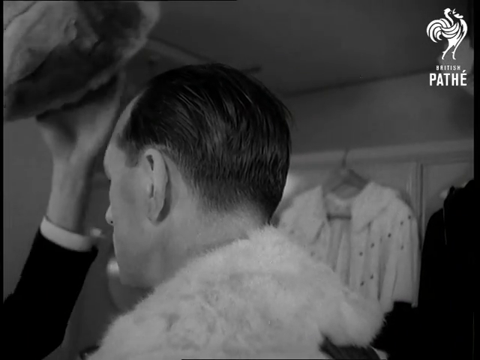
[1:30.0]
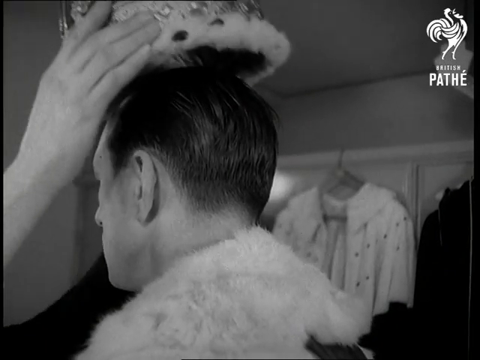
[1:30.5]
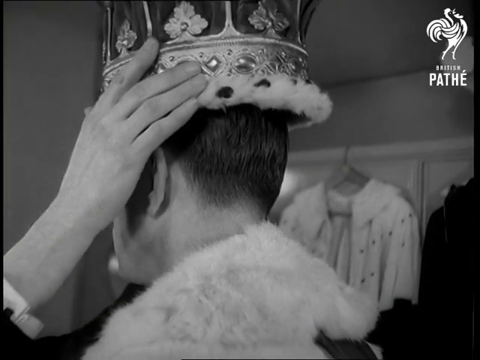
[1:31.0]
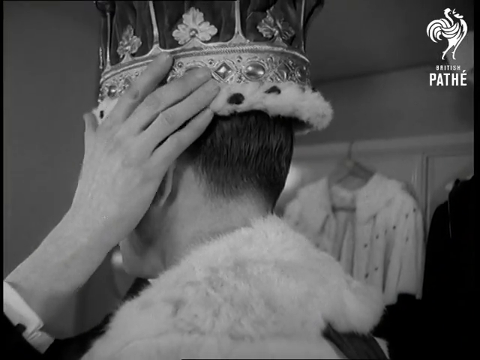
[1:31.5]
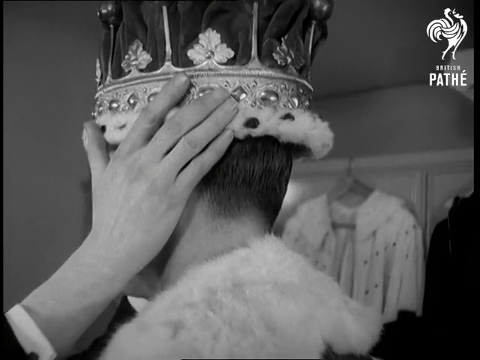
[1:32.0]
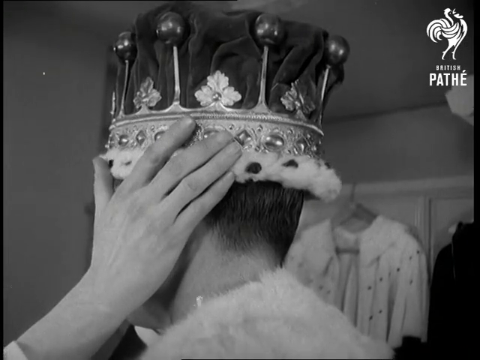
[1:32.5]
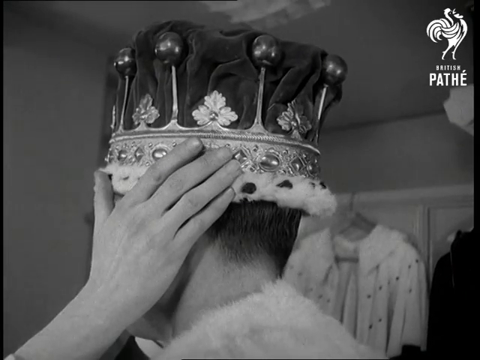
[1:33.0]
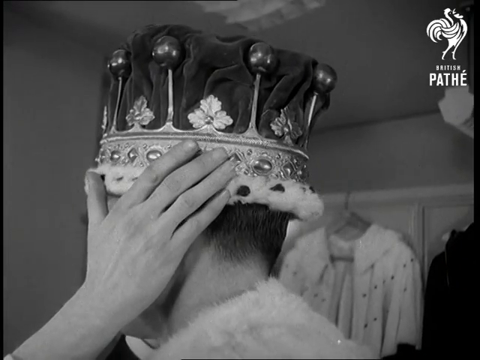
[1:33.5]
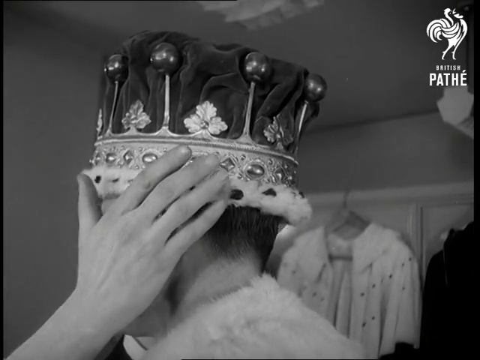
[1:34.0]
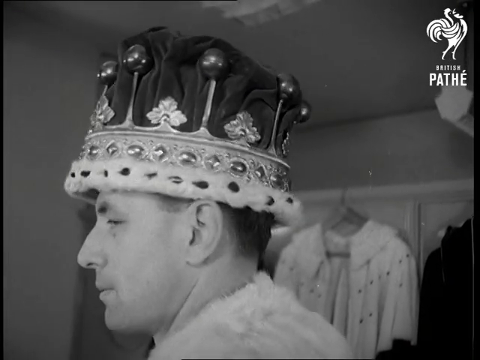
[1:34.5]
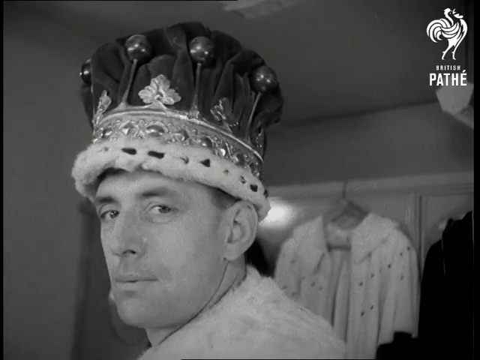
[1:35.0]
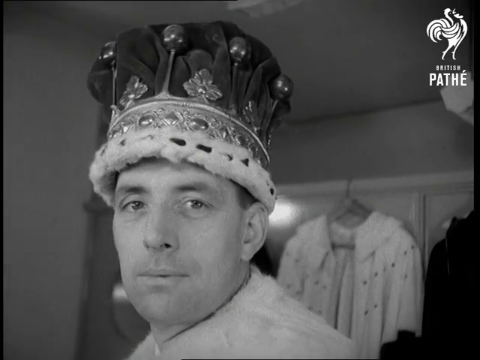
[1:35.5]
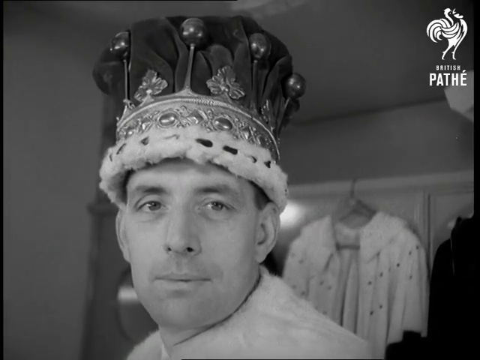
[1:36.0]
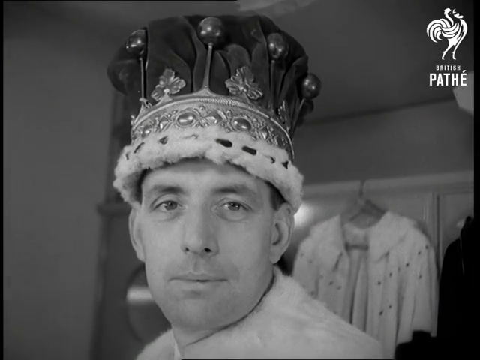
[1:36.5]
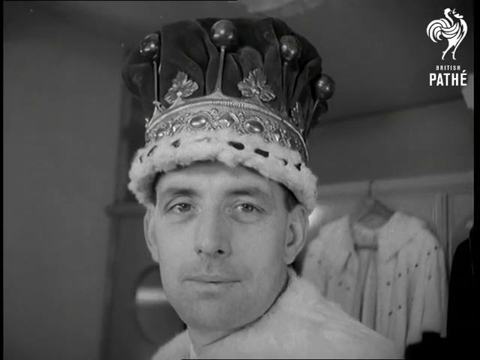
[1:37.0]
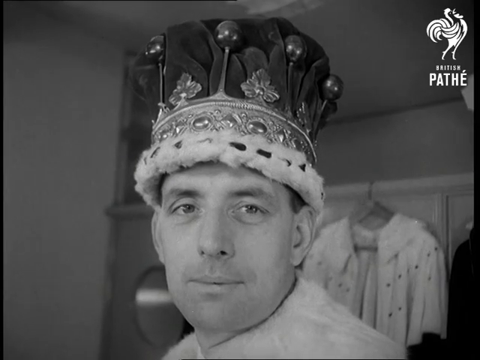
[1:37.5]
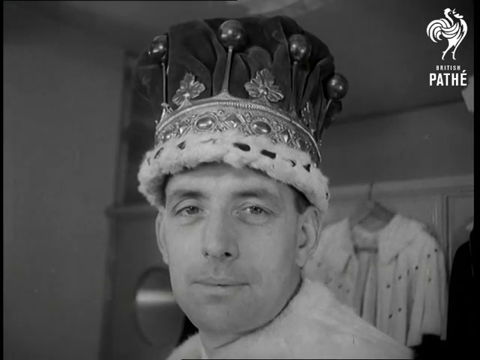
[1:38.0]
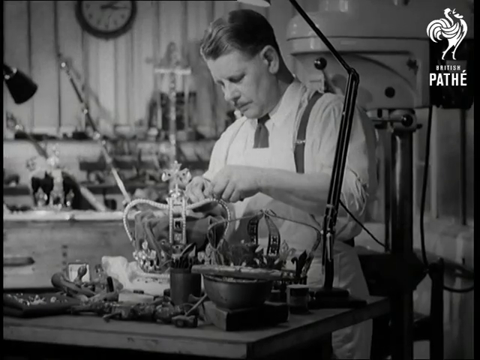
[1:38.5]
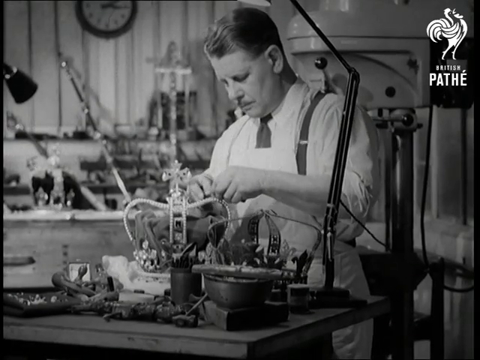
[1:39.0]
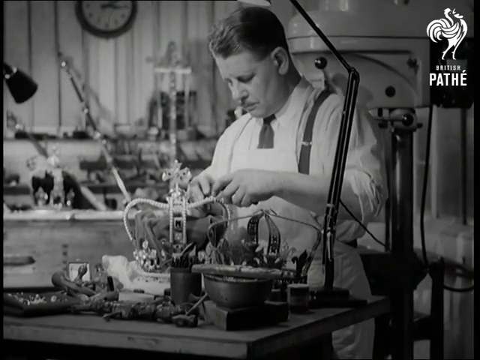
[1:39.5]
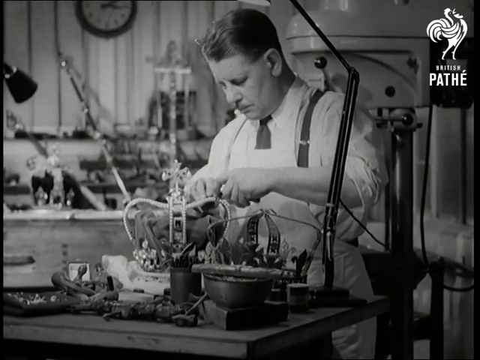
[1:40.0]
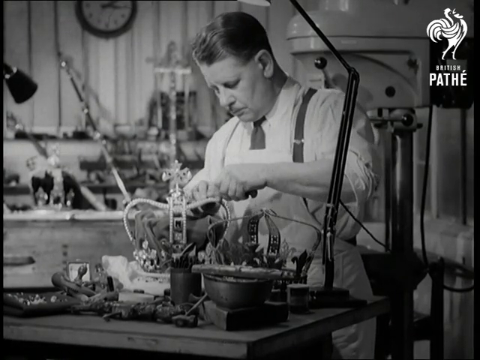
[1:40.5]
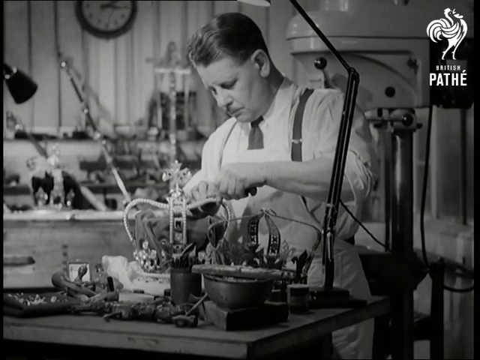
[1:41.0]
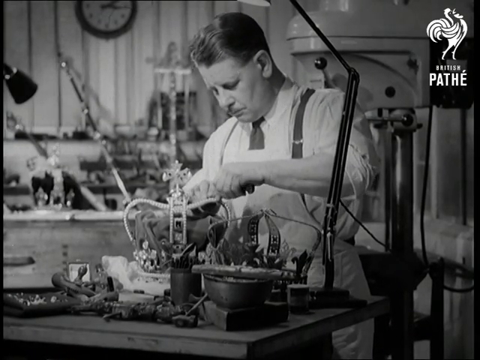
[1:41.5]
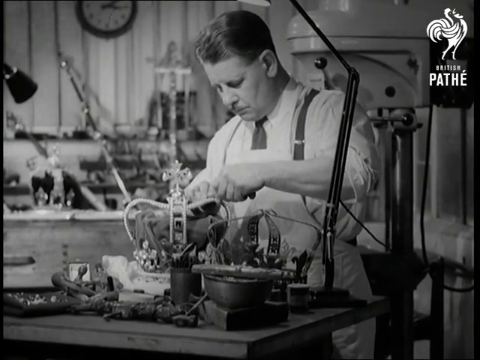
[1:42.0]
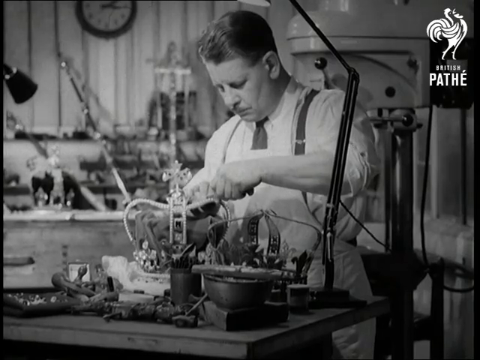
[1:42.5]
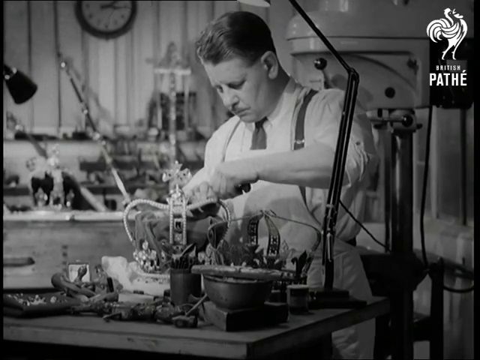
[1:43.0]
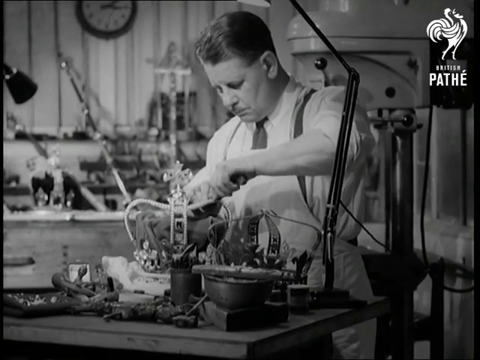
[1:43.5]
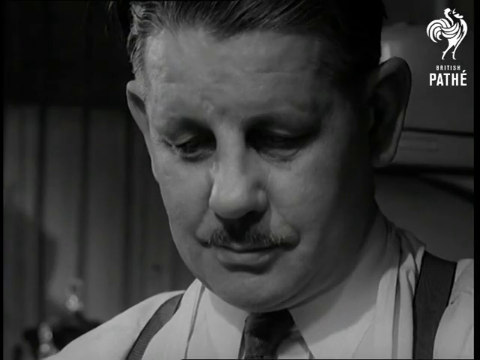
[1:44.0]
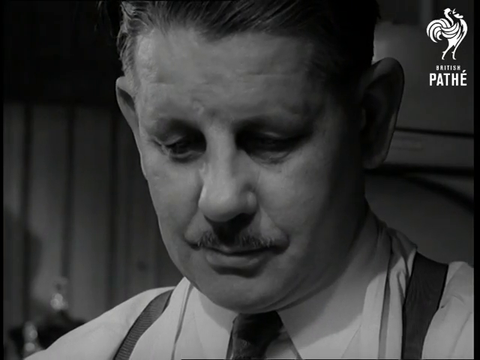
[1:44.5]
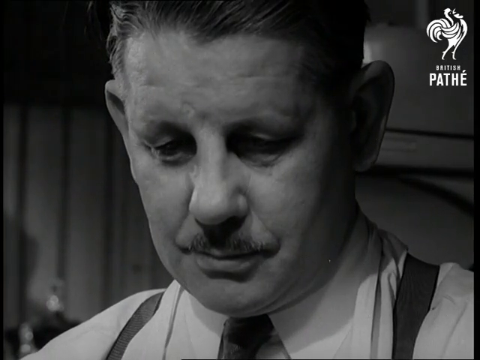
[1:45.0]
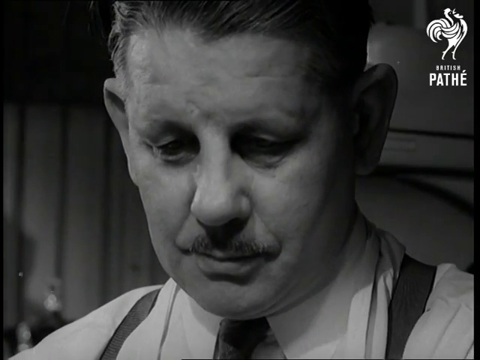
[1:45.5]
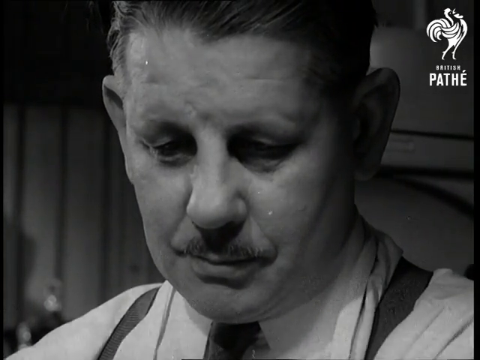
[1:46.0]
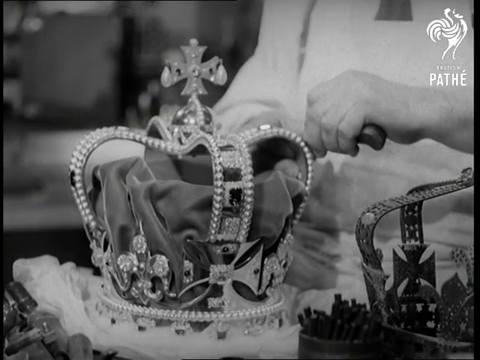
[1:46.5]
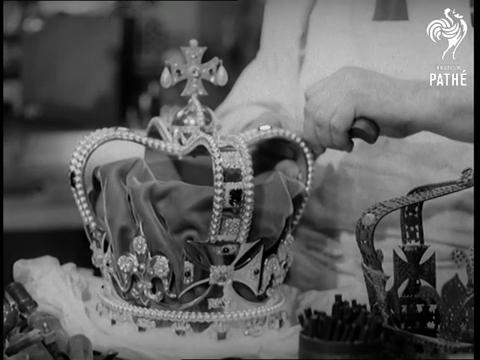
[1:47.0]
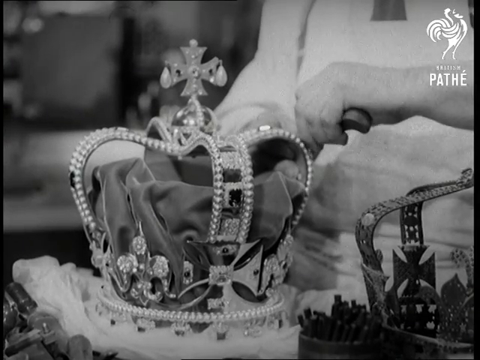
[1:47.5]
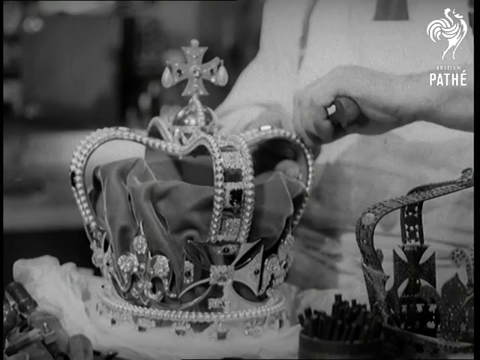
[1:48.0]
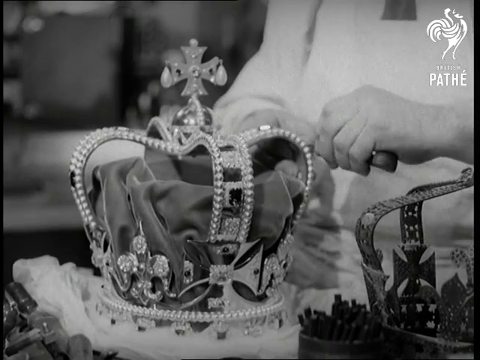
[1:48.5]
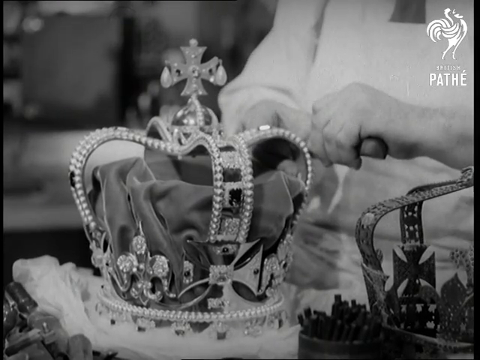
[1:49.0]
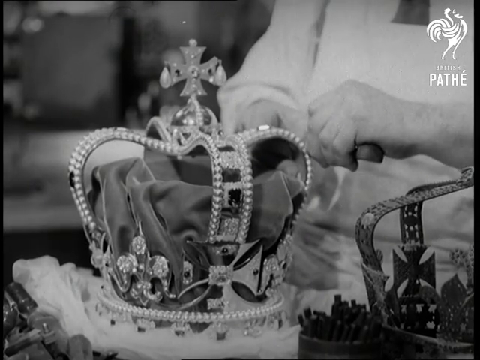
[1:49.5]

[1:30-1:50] The gentleman looks right into the camera with the crown on. The scene then moves to a worker with a mustache wearing an apron and a tie, standing at some sort of desk contraption and shaping the frame of a crown. There are close-ups of him doing the work and a close-up of the very detailed crown with jewels all around it; the black and white footage hides the colours. In the background are a clock, a lot of machinery and tools, and a light.